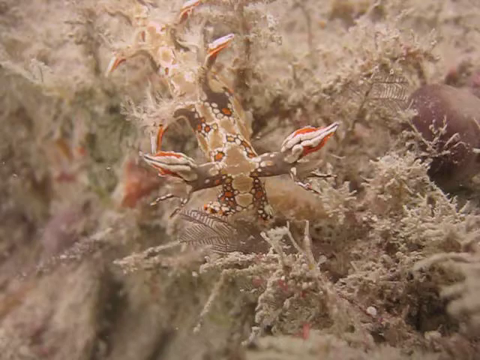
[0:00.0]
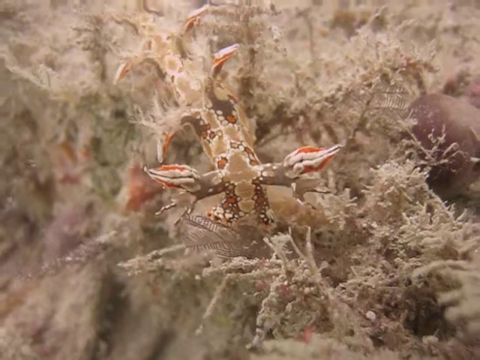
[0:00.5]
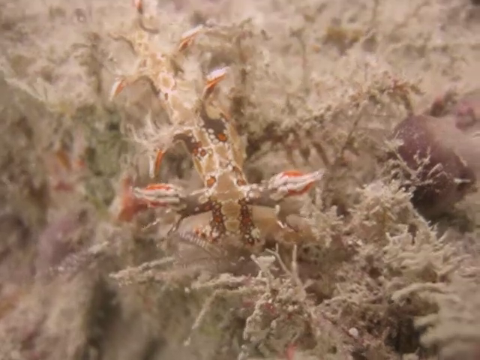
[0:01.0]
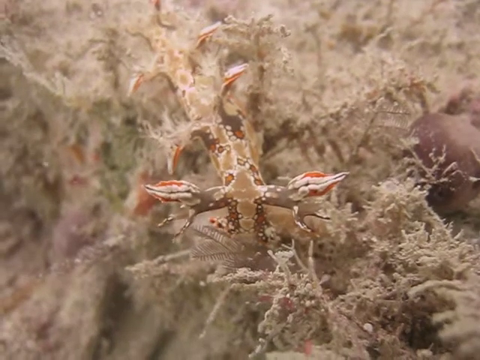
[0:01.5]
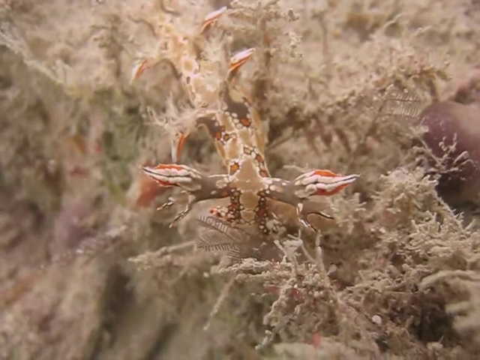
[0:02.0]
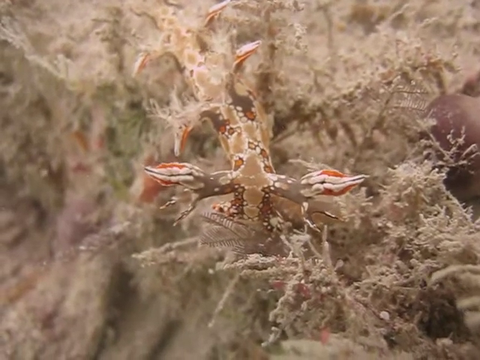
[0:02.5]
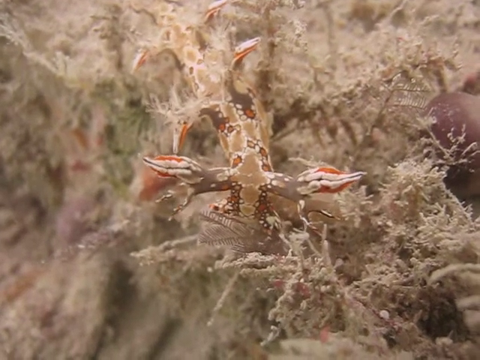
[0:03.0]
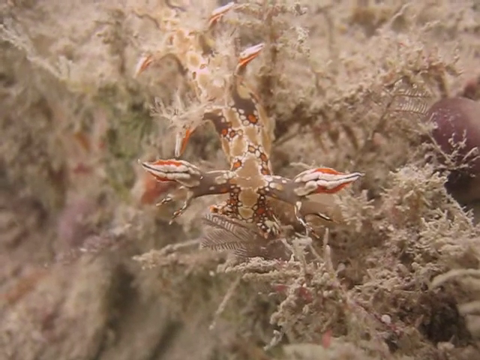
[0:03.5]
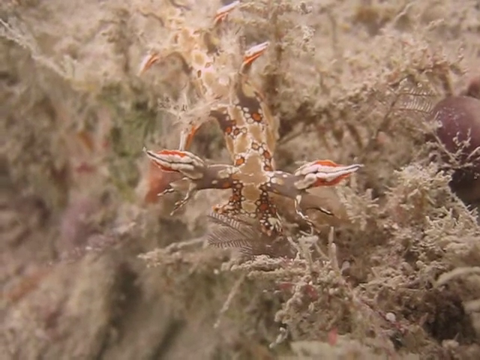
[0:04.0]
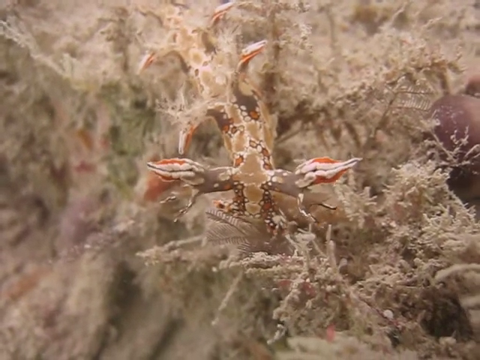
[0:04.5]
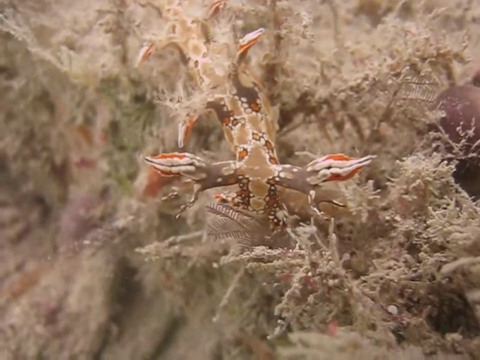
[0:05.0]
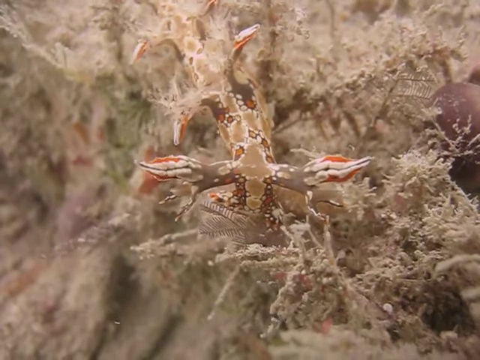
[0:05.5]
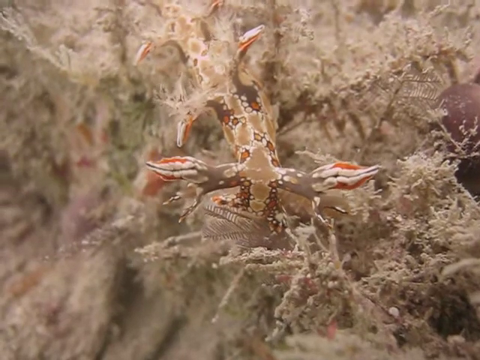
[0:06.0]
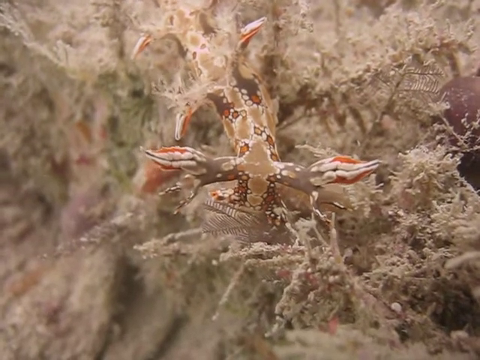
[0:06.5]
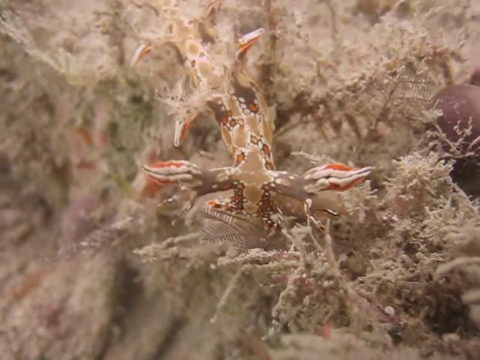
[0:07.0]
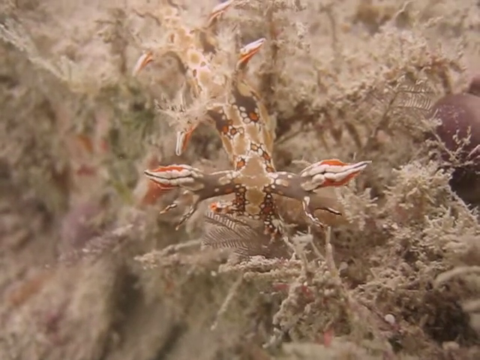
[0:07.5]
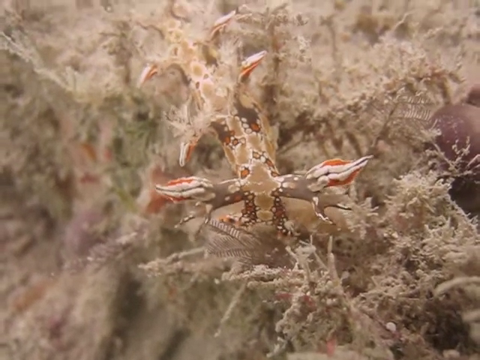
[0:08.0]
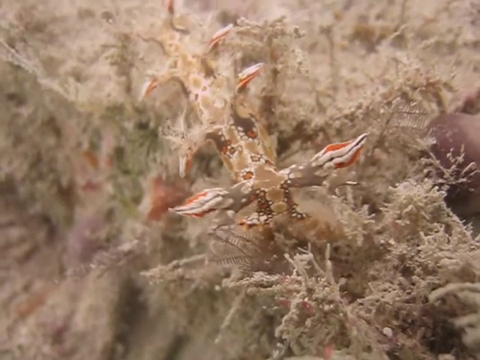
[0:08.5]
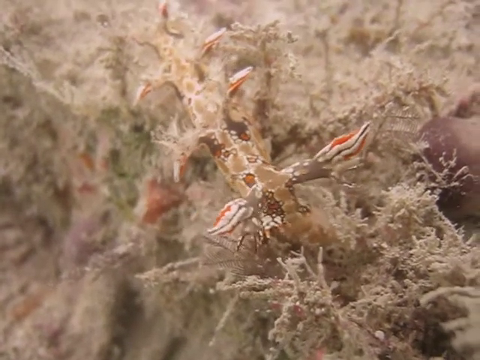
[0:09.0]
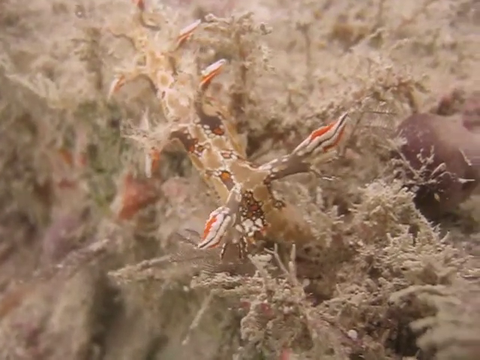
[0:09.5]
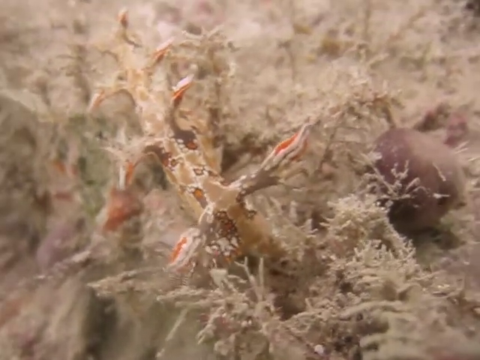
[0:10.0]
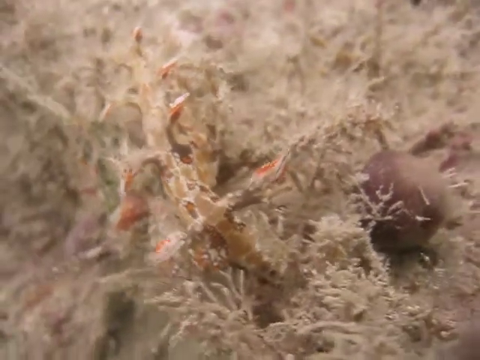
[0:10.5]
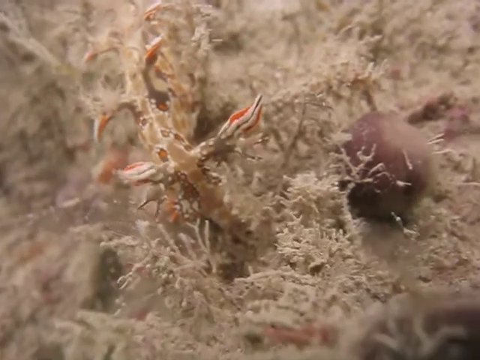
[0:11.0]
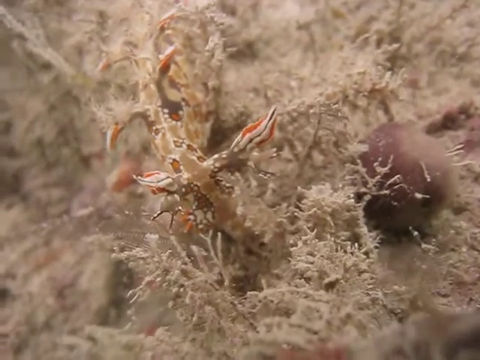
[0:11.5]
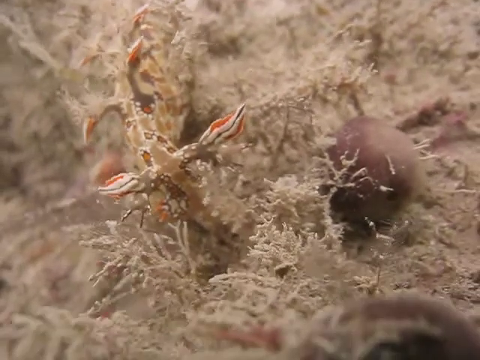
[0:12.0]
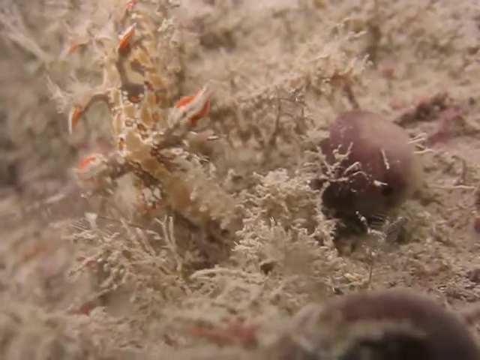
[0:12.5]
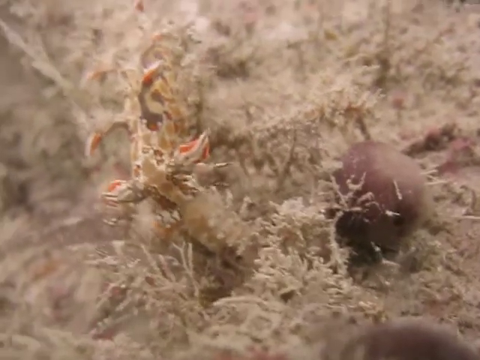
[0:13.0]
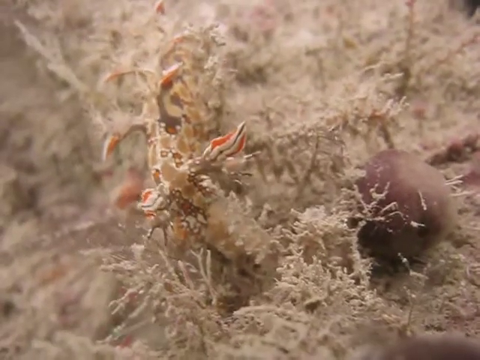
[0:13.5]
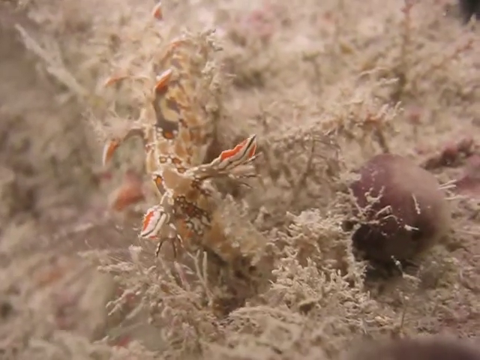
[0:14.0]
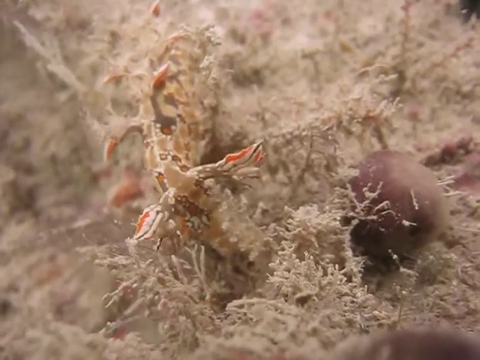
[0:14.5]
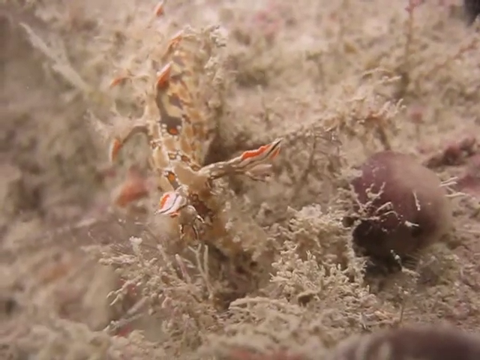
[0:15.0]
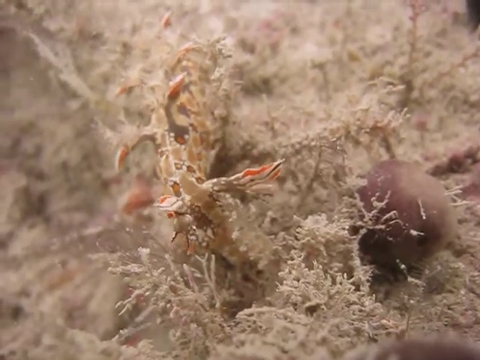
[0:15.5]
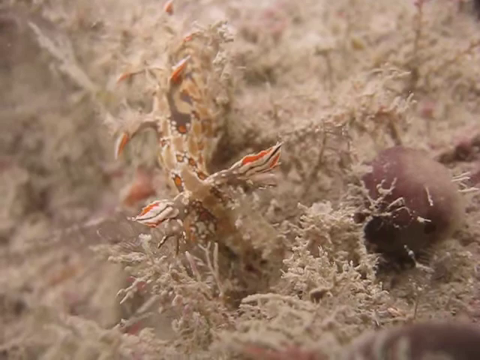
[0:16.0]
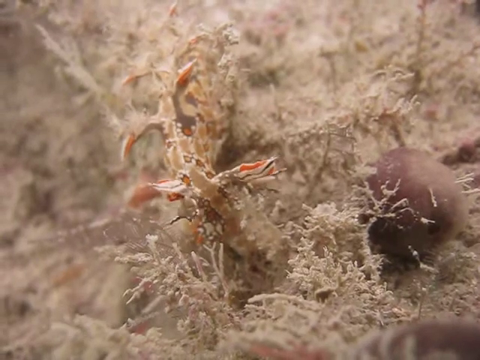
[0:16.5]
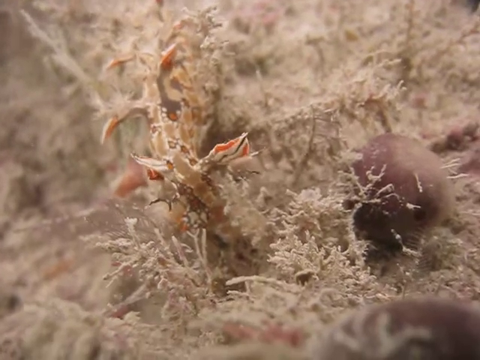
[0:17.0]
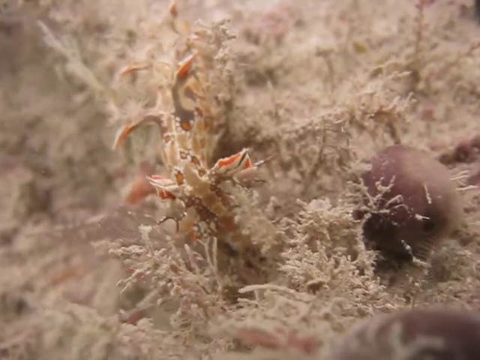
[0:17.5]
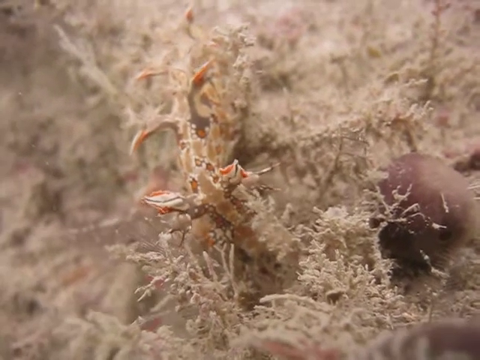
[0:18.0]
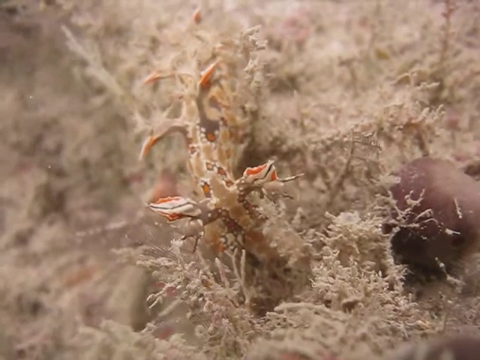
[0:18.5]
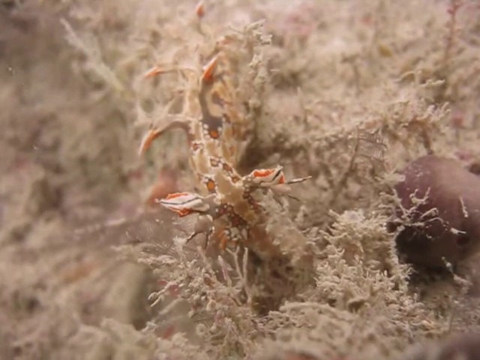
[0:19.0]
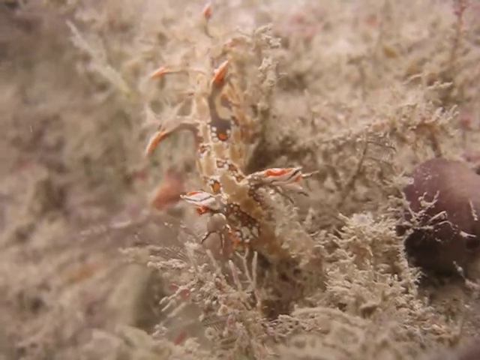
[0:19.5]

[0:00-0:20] A solitary ocean creature is on a spongy, coral-type area at the bottom of the ocean. A large rock is in the background, and no other creatures are visible. The creature is sort of beige with an orange and brown design on its body. It does not really swim; it simply sort of sways with the ocean current and barely moves. Its claw-type features sort of move back and forth, but there are no large movements, and it stays in this one spot on the area of coral or sponge-type material on the ocean floor.